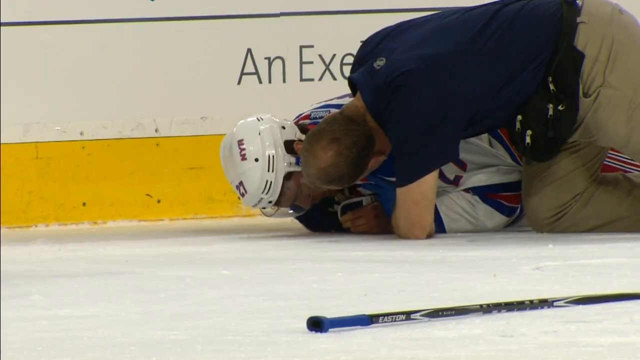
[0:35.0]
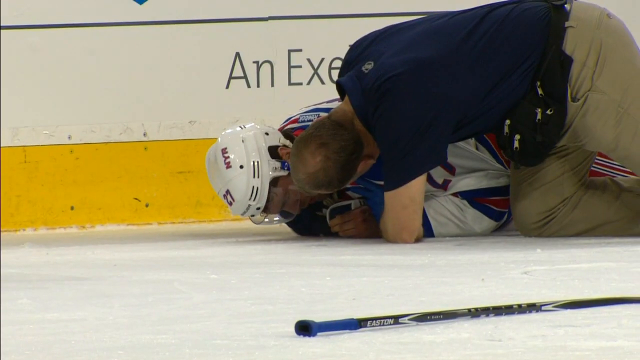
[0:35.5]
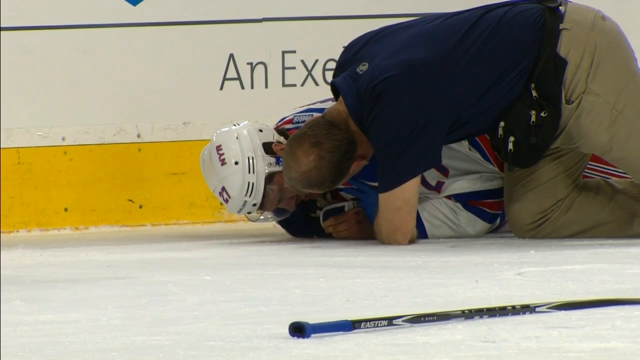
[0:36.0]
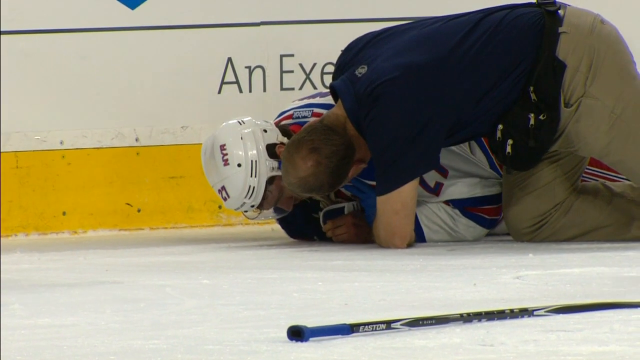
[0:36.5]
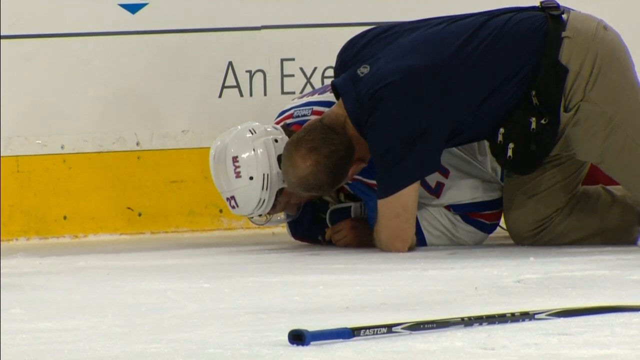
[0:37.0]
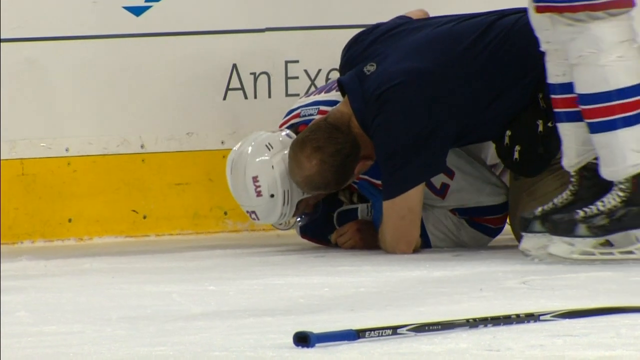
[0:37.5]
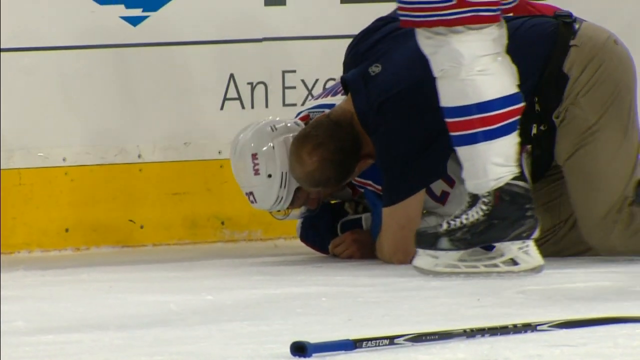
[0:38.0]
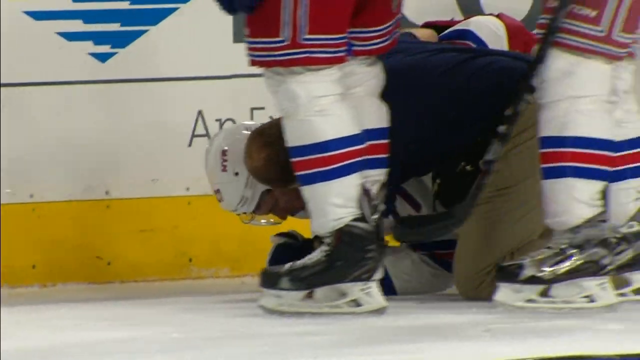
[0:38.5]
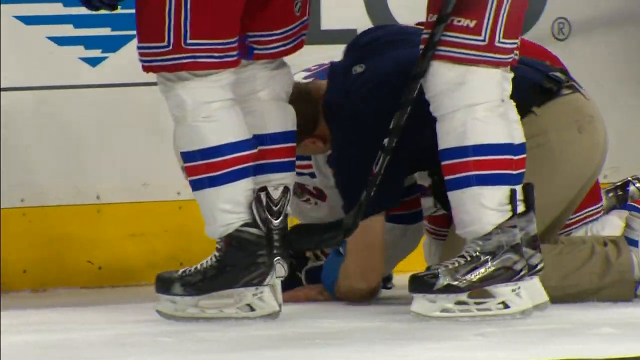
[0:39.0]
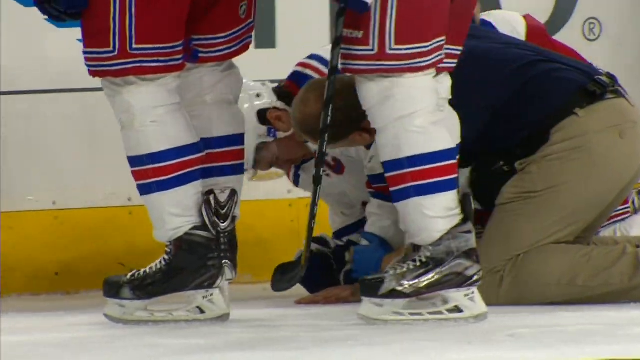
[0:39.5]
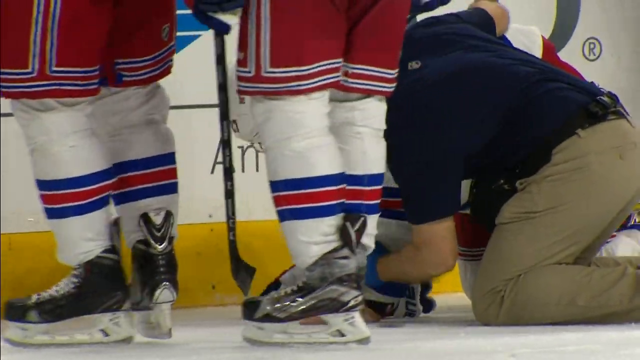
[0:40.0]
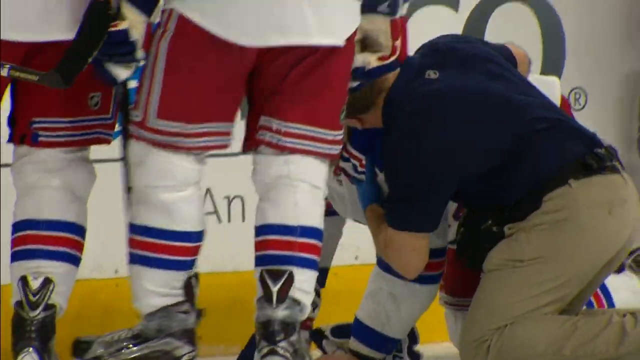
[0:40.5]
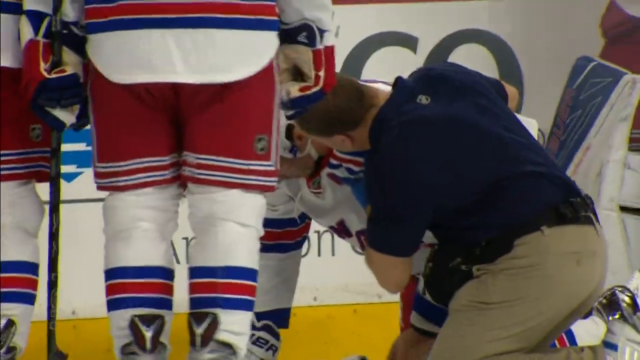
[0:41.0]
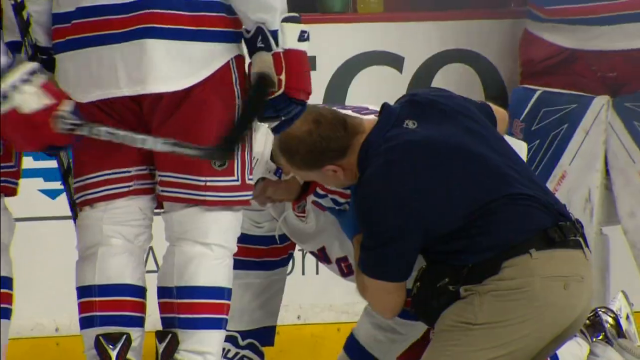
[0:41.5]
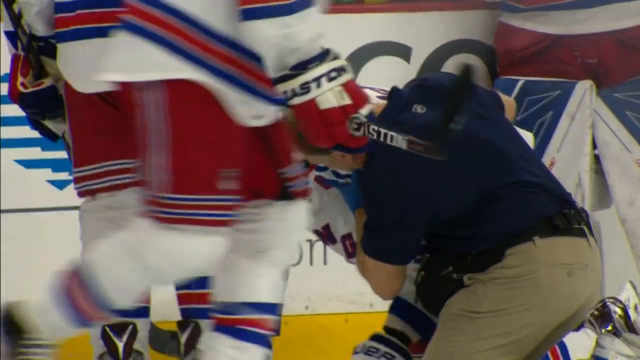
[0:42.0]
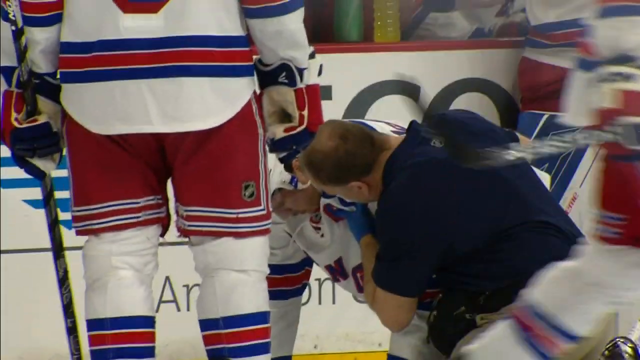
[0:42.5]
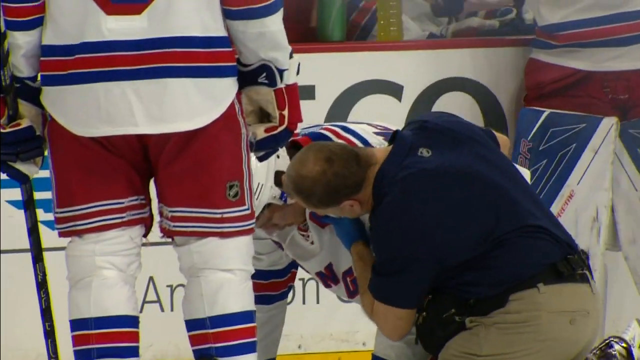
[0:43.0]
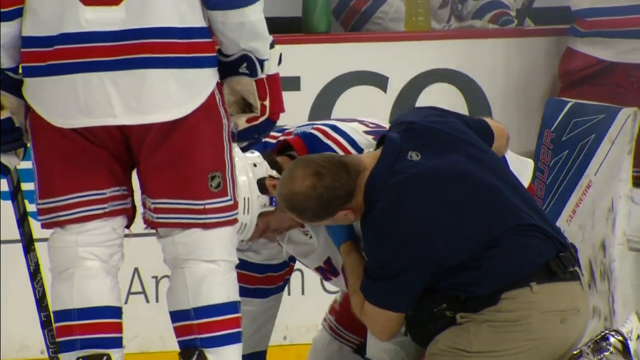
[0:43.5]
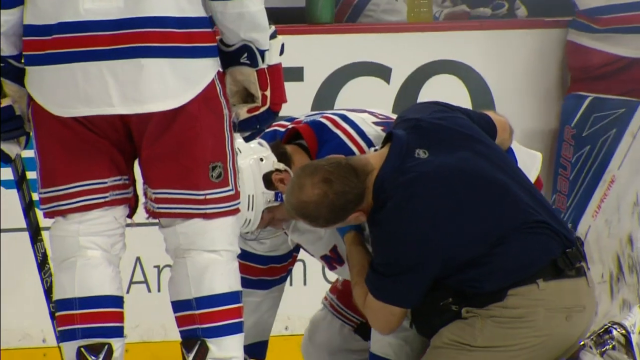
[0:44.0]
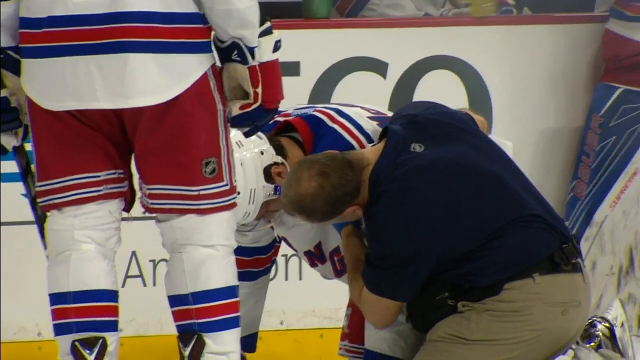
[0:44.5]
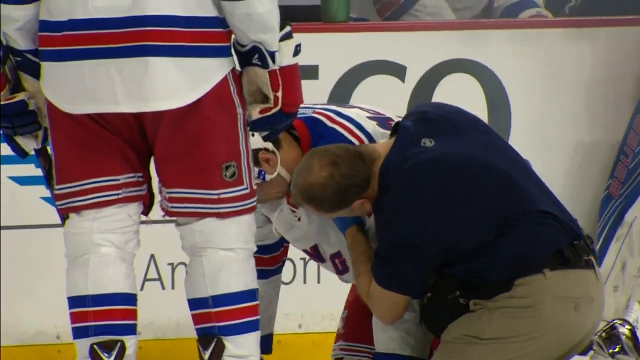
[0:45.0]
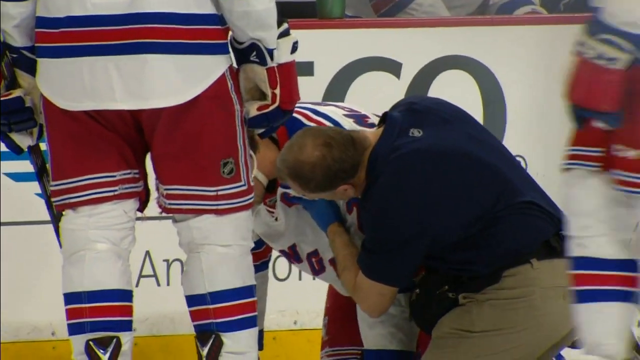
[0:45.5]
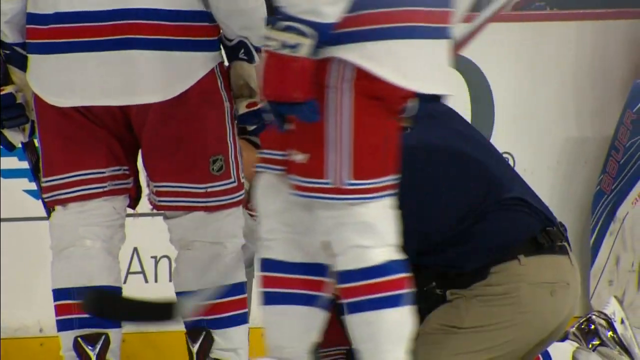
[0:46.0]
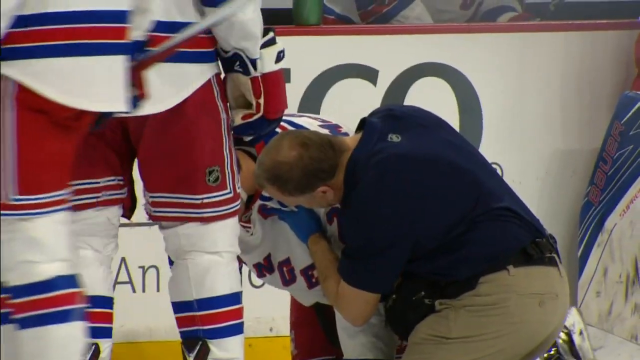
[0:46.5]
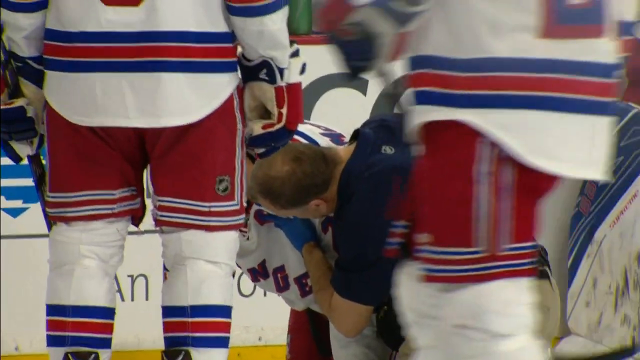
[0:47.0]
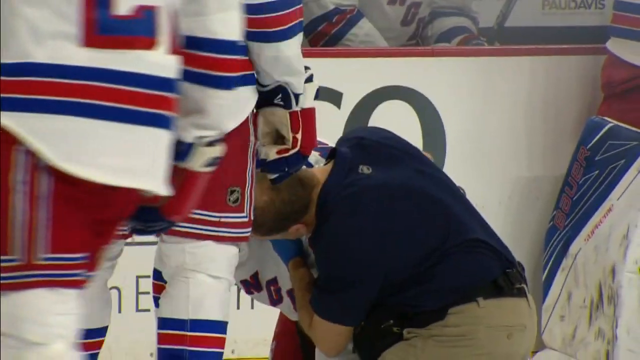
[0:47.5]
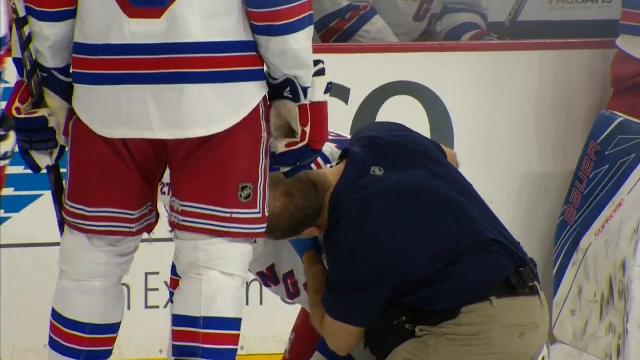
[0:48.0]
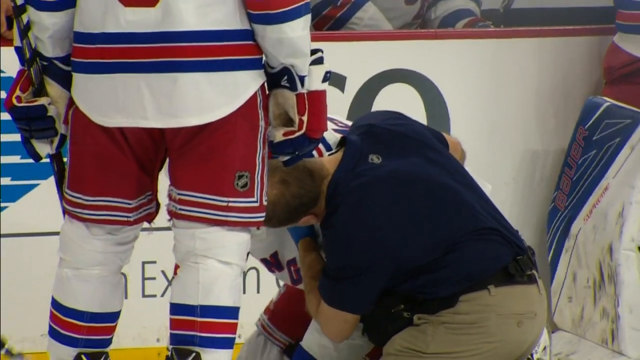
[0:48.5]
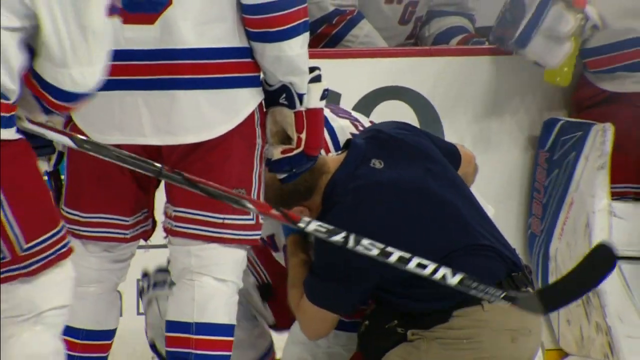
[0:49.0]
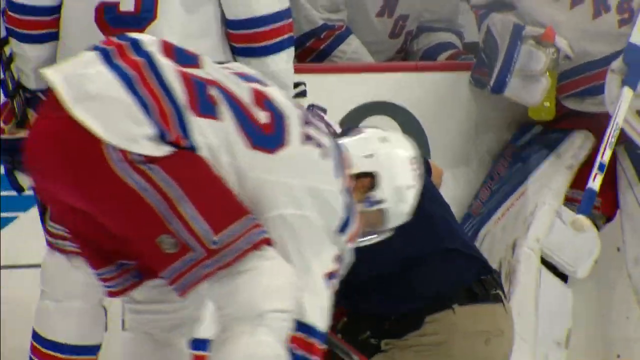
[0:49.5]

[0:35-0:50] The title appears to read Gotta See It, Simmond Ejected for Interference. The player from the team Simmond is playing against is still on the ground, with the coach down beside him talking to him and finding out what is going on. A couple of other players arrive, and the player gets up onto his hands and knees. More players surround and support their fallen teammate; only the bottom halves of these three or four teammates are visible. The coach talks to him the whole time, apparently encouraging him to get up and checking how he is. It is still a timeout, and the player is slow to get up and off the ice; he looks really stunned or seriously hurt.